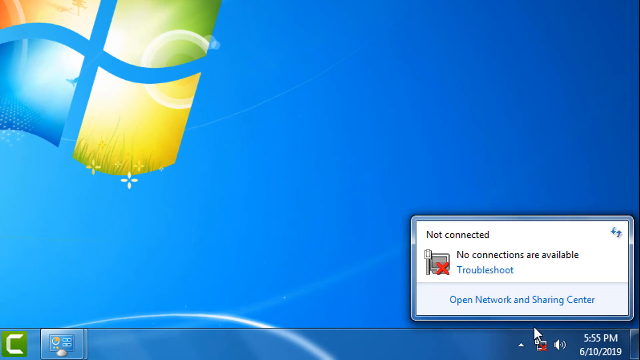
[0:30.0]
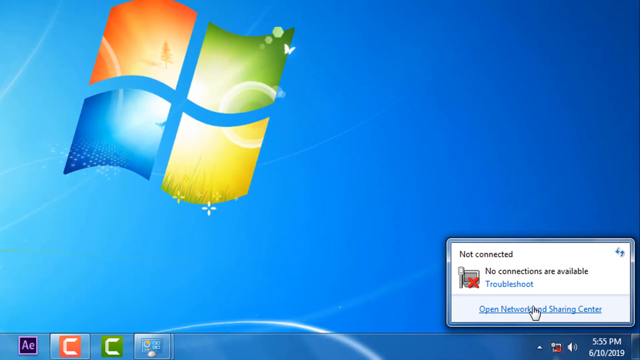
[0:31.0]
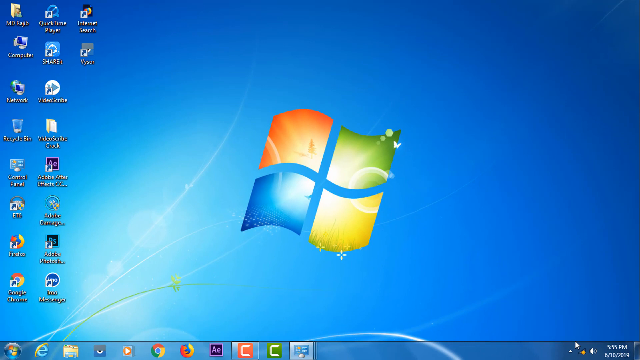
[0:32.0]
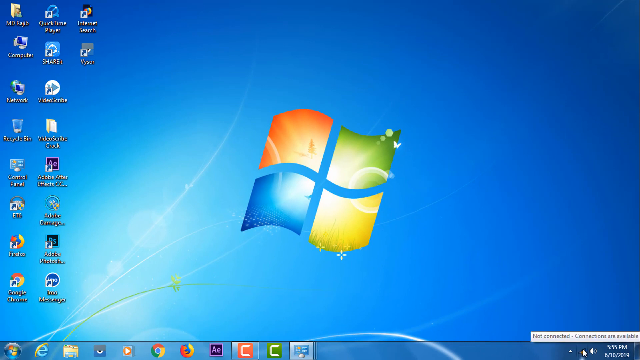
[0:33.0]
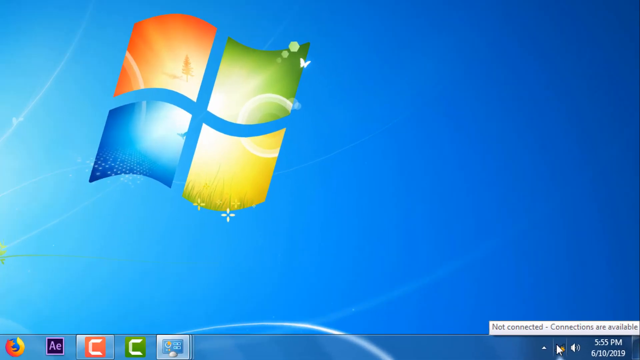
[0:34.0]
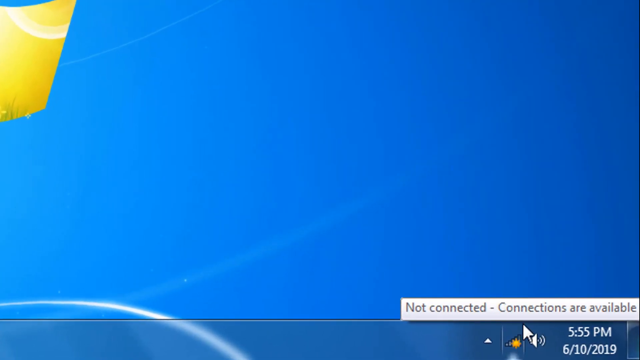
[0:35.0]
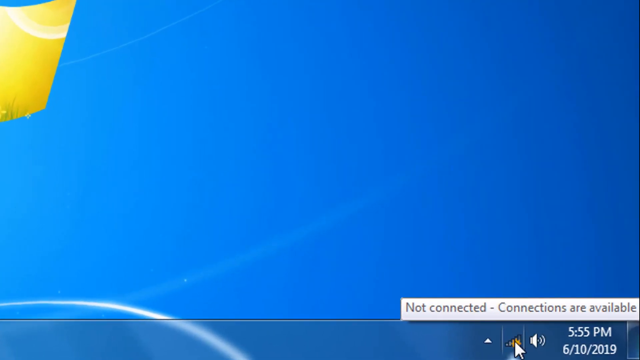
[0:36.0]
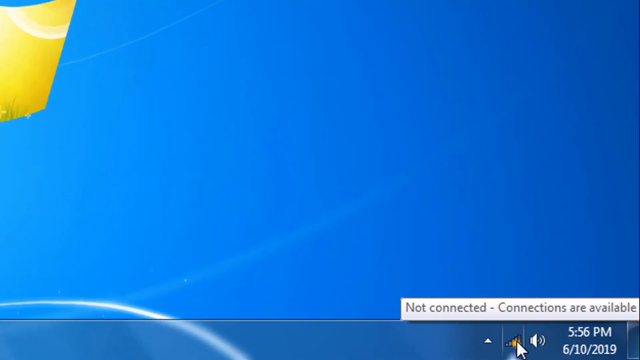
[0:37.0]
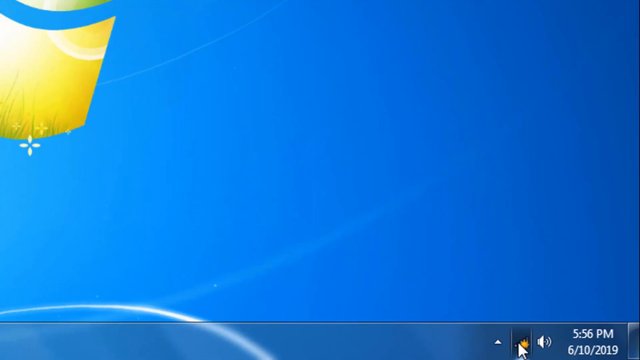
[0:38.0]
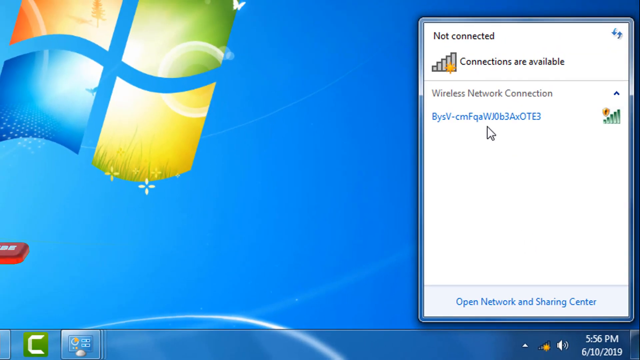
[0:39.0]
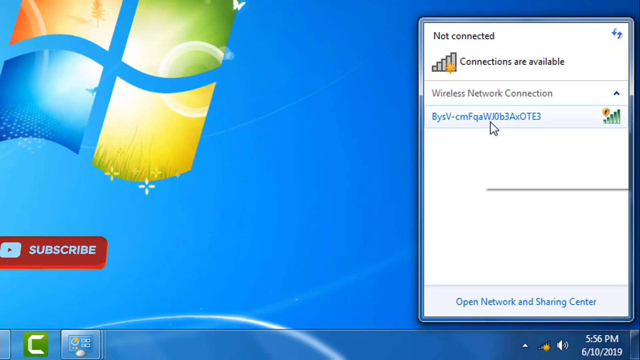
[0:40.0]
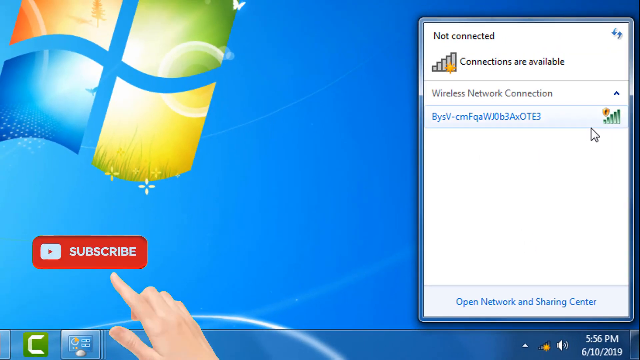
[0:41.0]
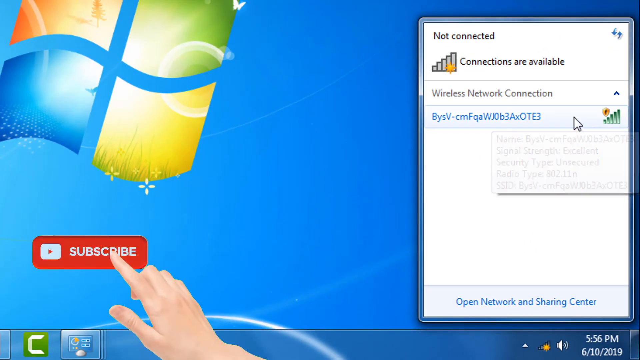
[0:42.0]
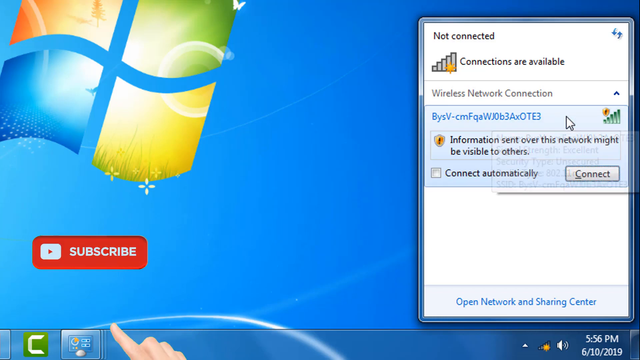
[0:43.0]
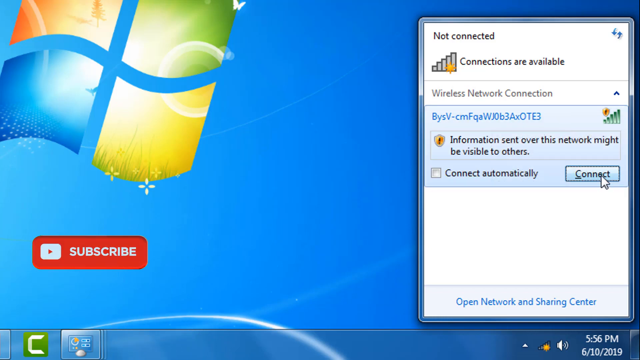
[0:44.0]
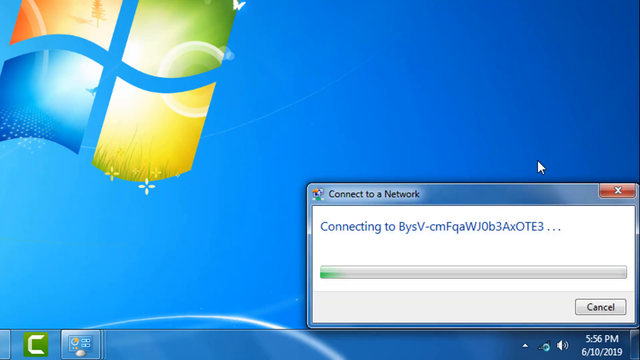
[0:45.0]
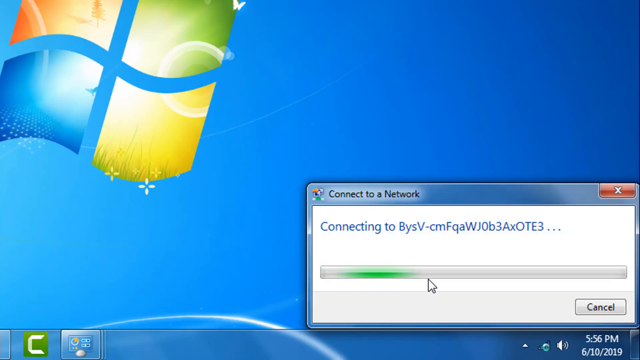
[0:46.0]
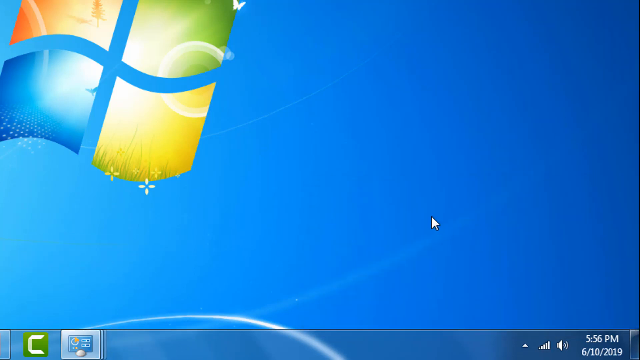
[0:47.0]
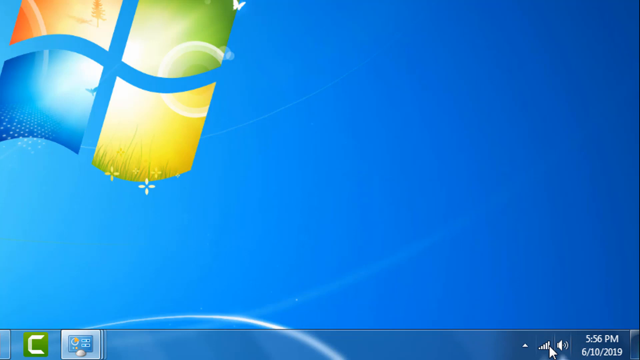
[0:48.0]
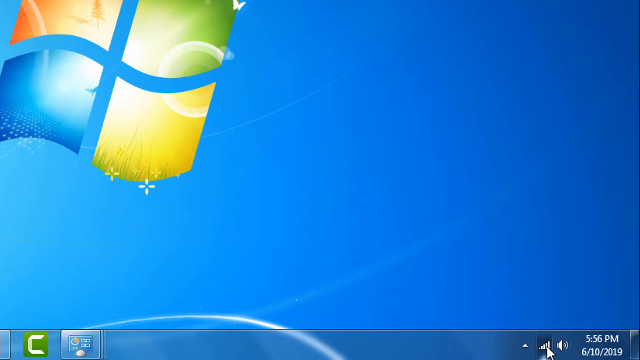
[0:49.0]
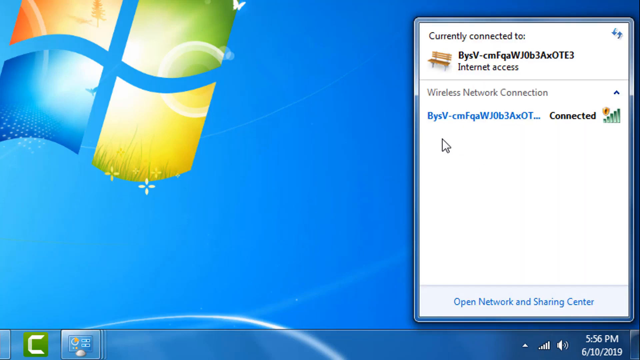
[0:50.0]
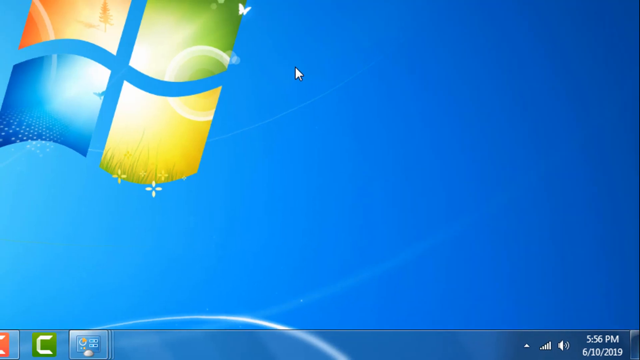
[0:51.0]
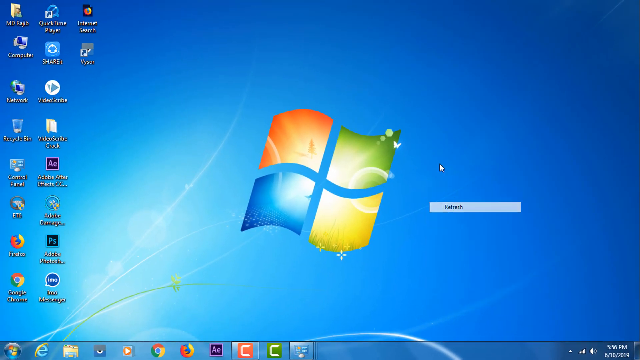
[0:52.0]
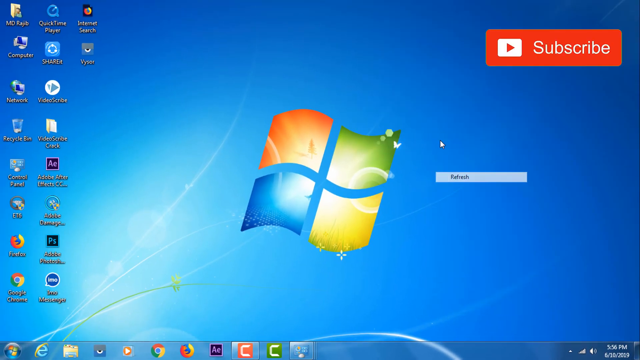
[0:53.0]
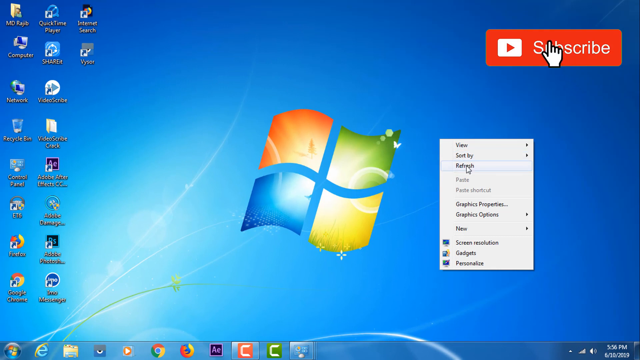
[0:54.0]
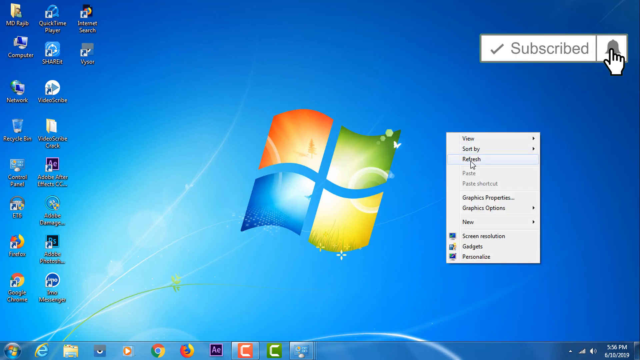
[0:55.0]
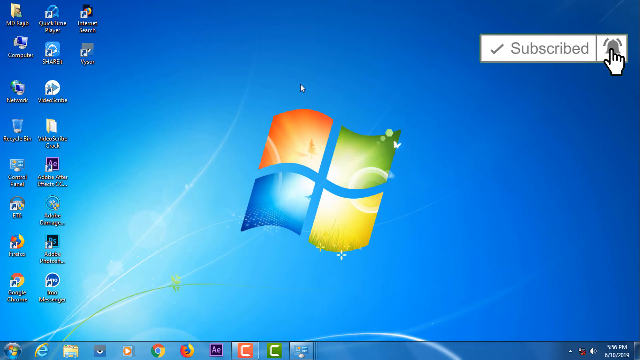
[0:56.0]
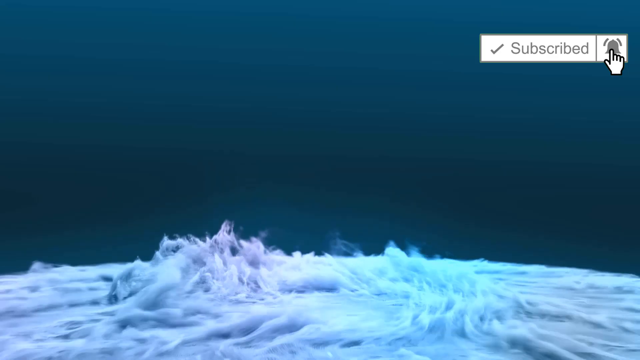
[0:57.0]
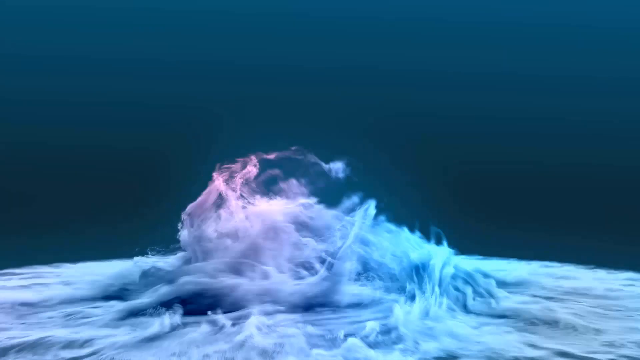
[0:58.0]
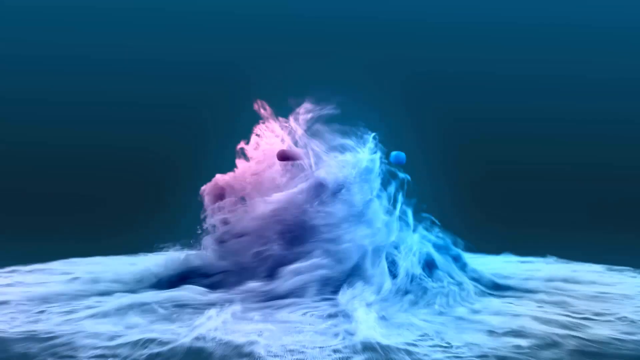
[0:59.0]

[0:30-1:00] A zoomed-in view of the Windows screen shows the red, green, yellow and blue Windows logo in the top left corner. In the top right is a white box the user has opened that says "not connected, no connections are available," followed by blue text reading "troubleshoot, open network and sharing center." The screen zooms back out to show the Windows logo and blue background with the apps down the left-hand side, then zooms back in on the bottom right corner, where a text box pops up saying "not connected, connections are available" while the mouse hovers over a signal bar at the bottom of the screen. Clicking it shows "not connected. Connections are available. Wireless network connection," with blue text below that appears to be an available router. A red and white subscribe button appears at the bottom of the left-hand side, with a right hand pointing up and touching it; then the hand disappears. The user clicks the wireless network connection option and then clicks connect. A pop-up reads "connecting to" followed by the name of the router, with "connect to the network" at the top, and a green and grey loading bar appears. It disappears, and when the user hovers over the signal bar at the bottom of the screen, it shows they have internet access through the router they just connected to. They right-click and refresh several more times, and a subscribe notification button appears in the top right of the screen. The video then transitions to animated water on a dark blue background, spiraling up in blue and pink in the middle of the screen.